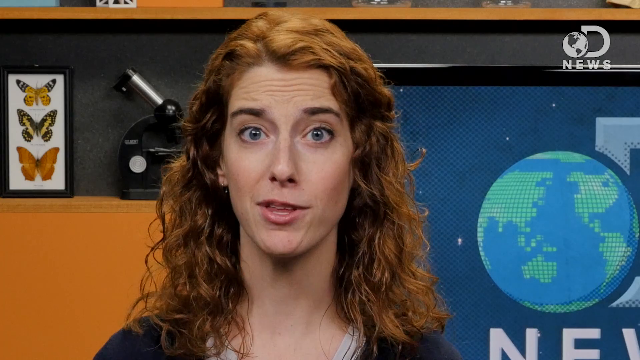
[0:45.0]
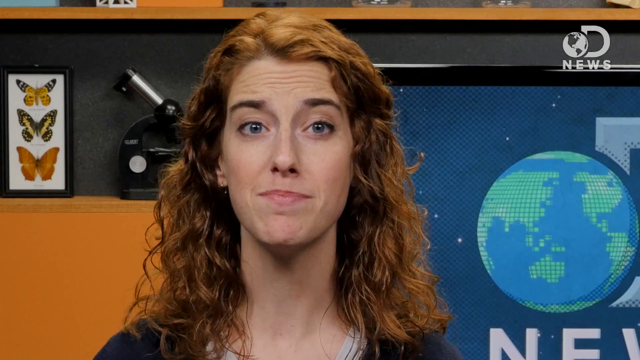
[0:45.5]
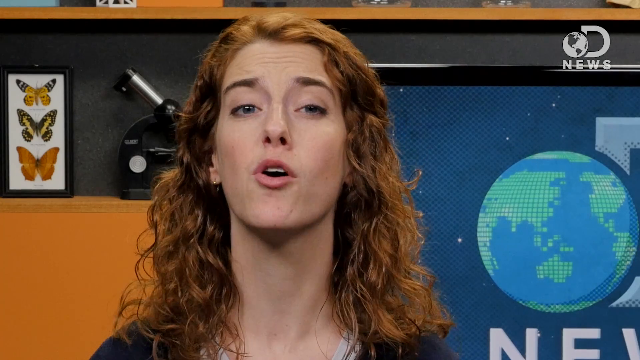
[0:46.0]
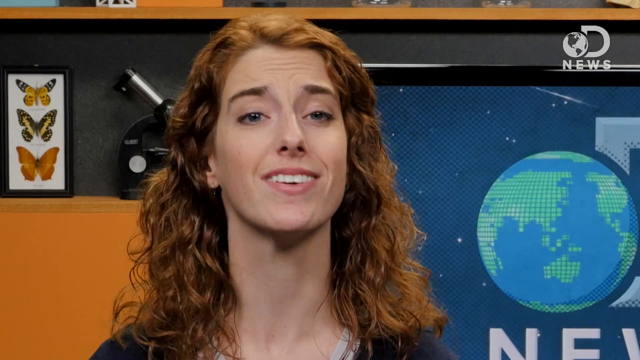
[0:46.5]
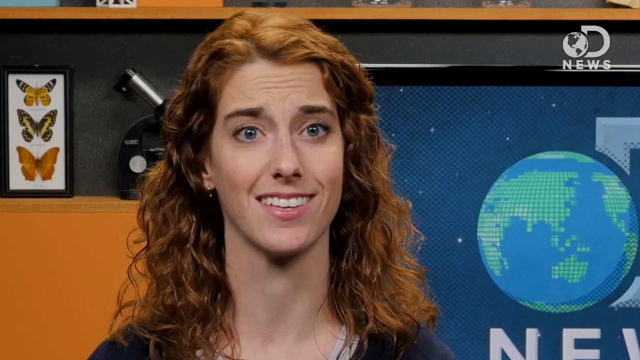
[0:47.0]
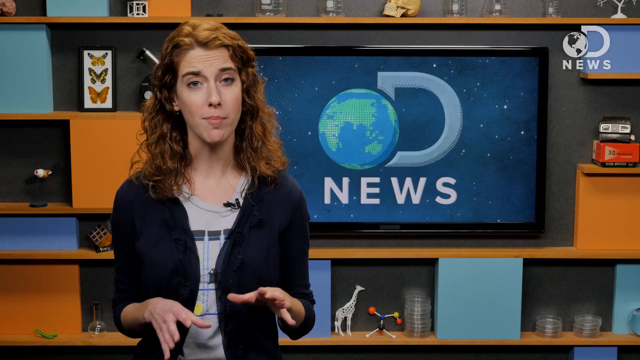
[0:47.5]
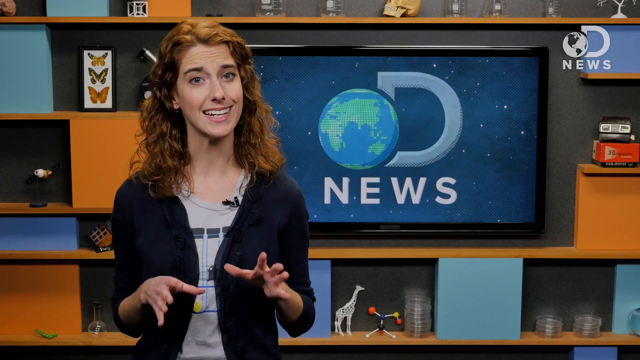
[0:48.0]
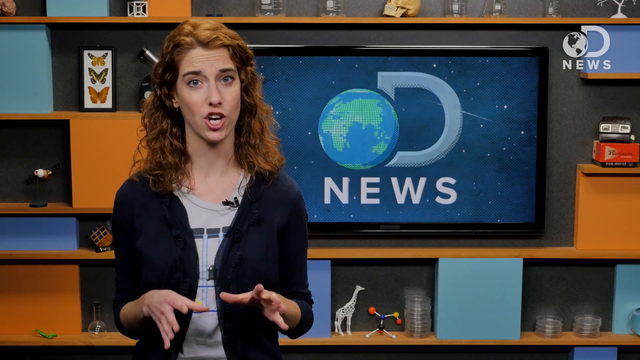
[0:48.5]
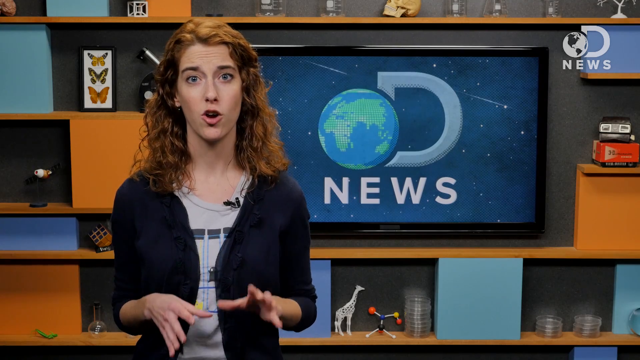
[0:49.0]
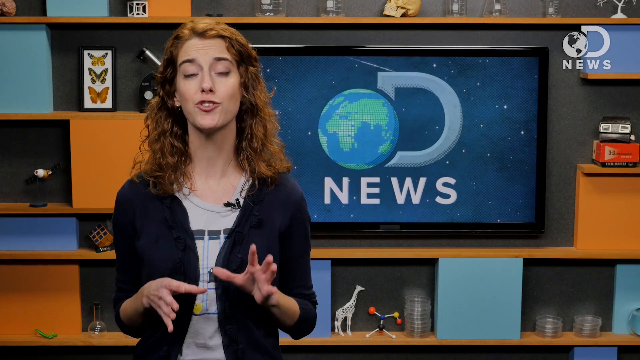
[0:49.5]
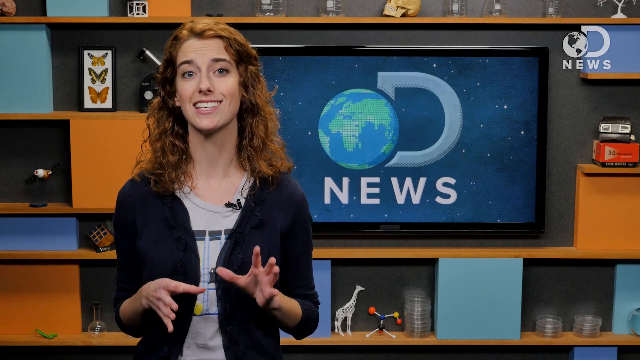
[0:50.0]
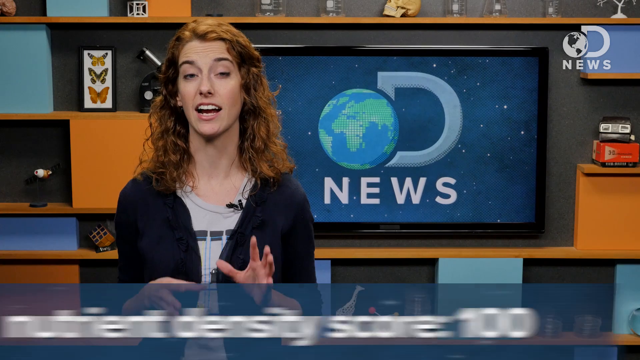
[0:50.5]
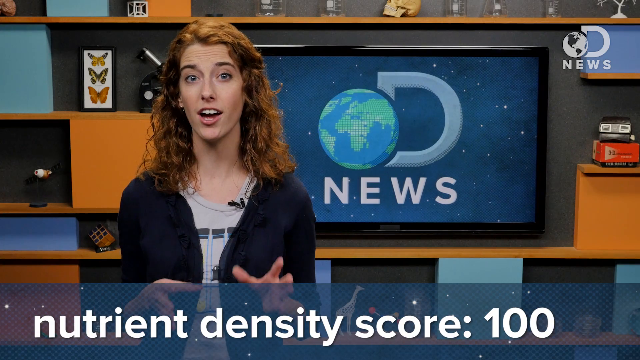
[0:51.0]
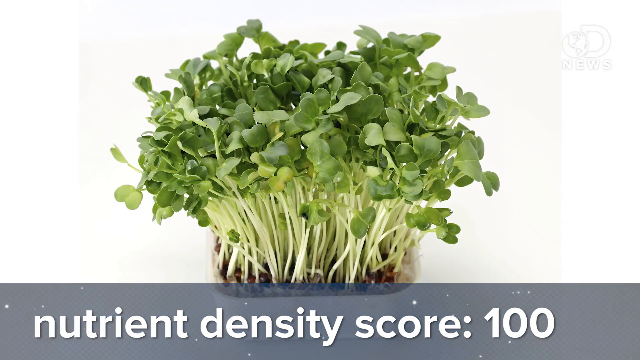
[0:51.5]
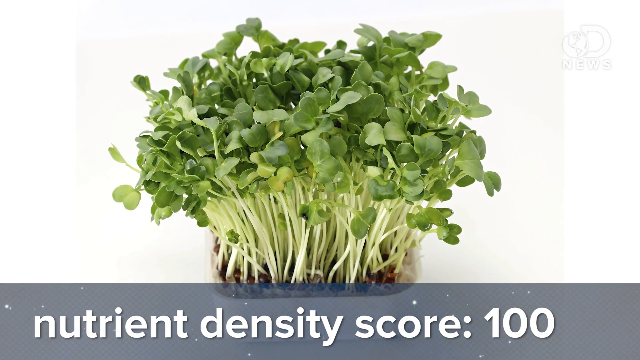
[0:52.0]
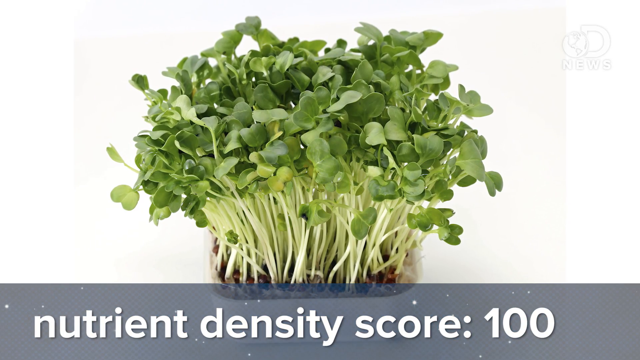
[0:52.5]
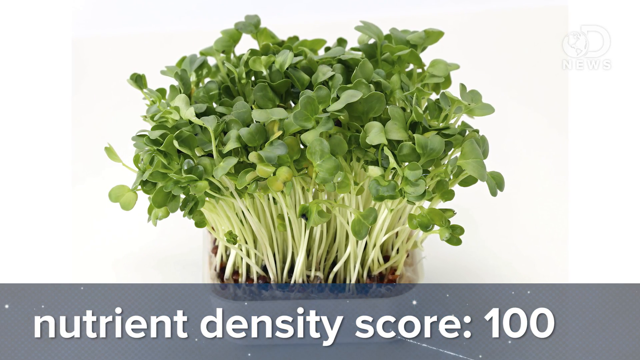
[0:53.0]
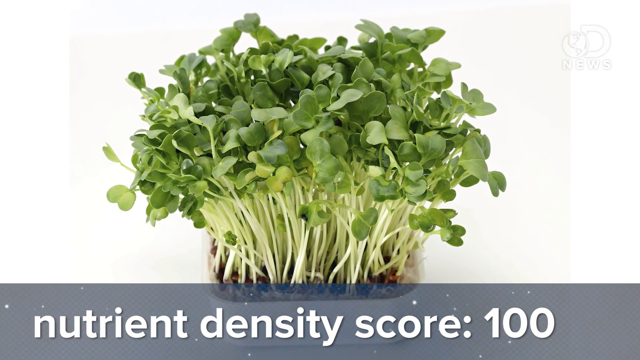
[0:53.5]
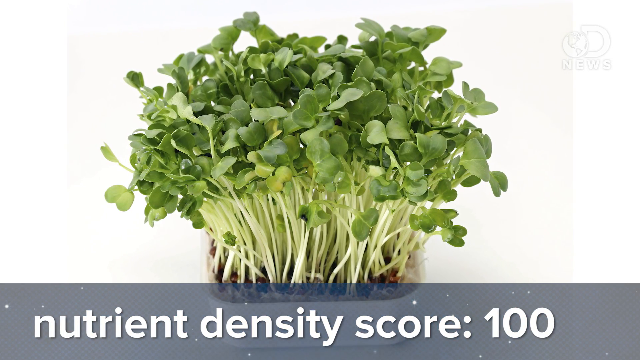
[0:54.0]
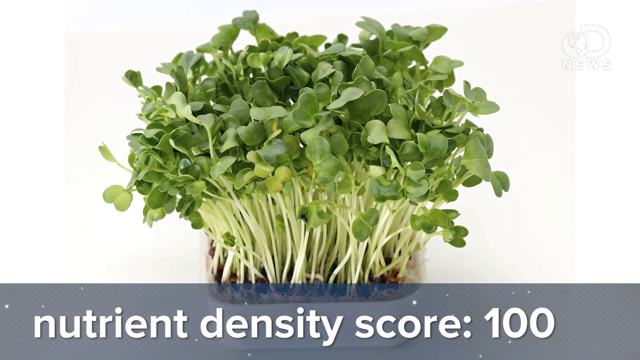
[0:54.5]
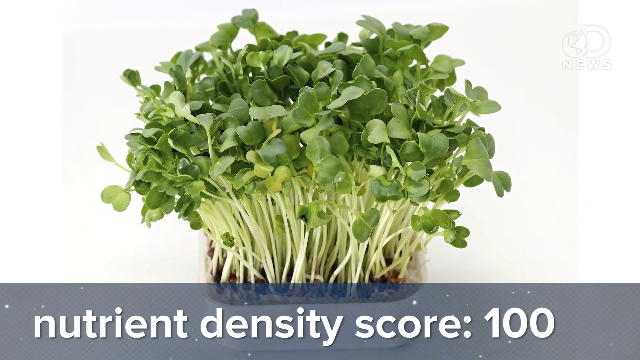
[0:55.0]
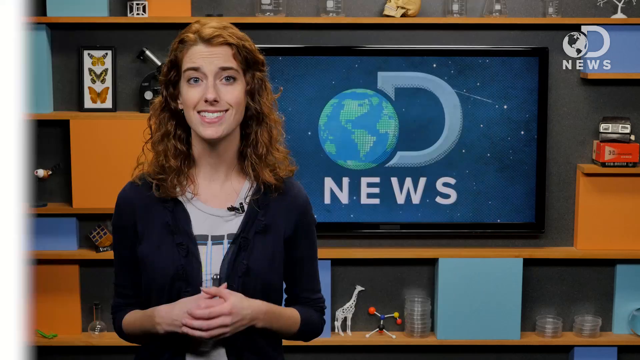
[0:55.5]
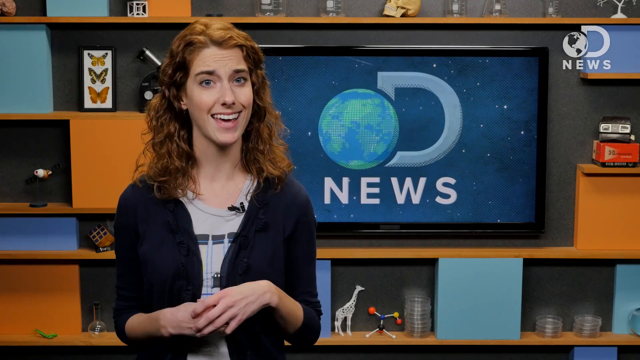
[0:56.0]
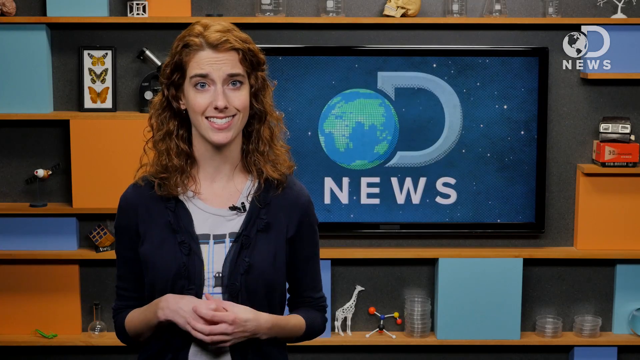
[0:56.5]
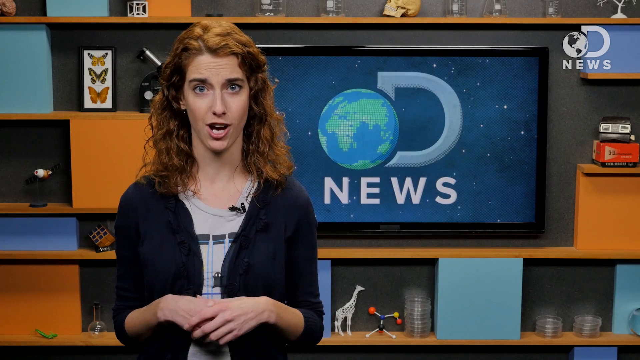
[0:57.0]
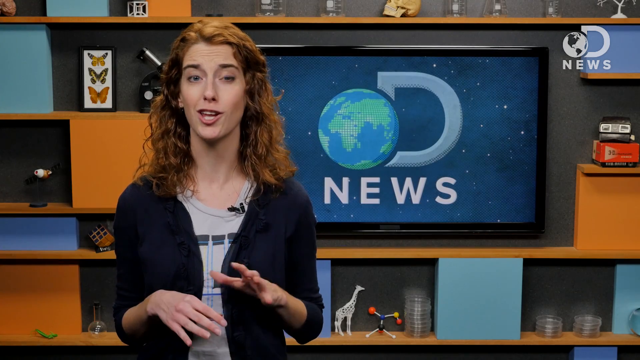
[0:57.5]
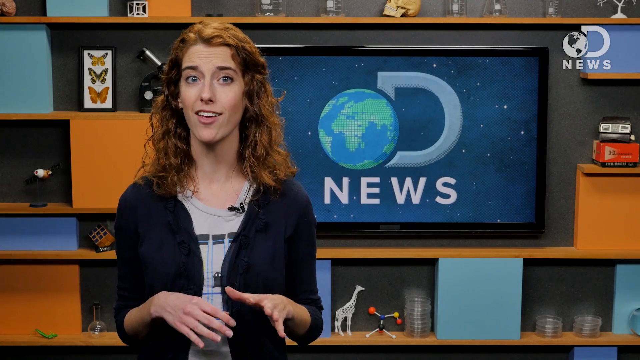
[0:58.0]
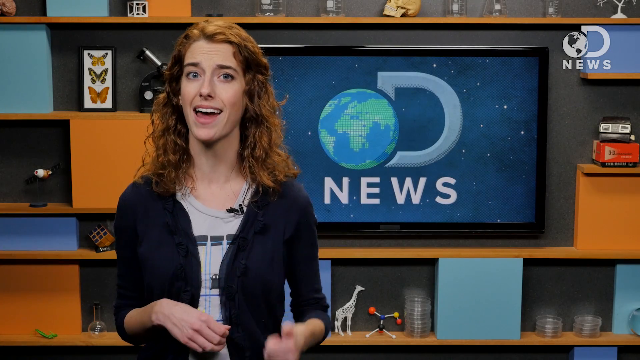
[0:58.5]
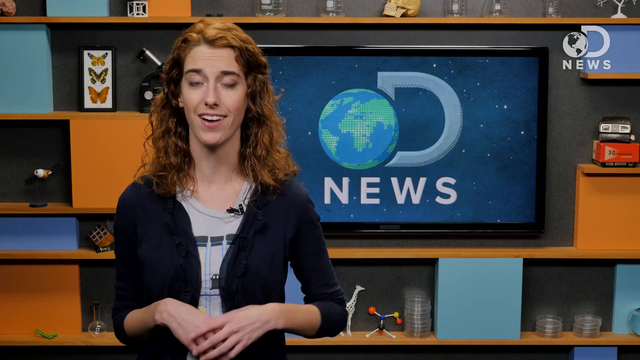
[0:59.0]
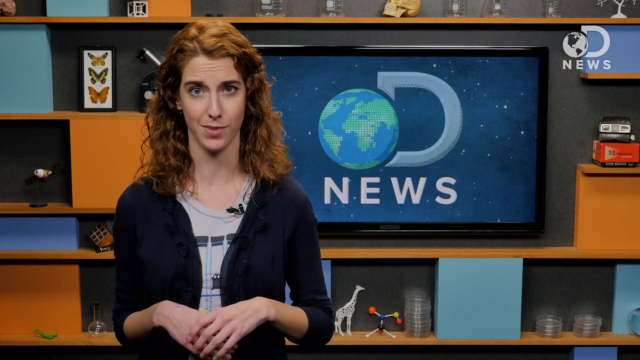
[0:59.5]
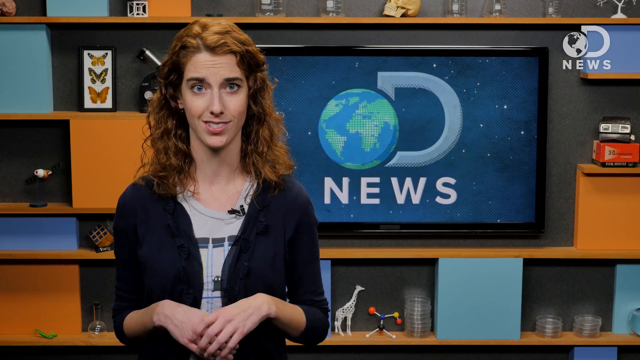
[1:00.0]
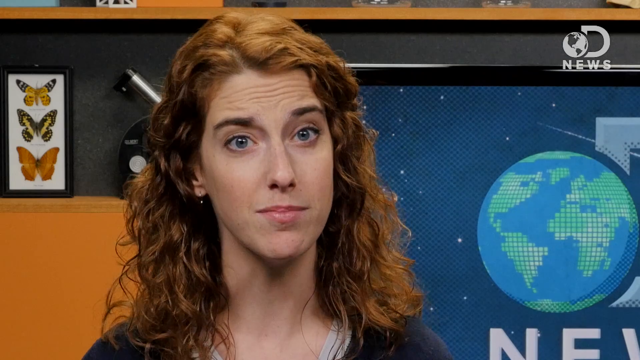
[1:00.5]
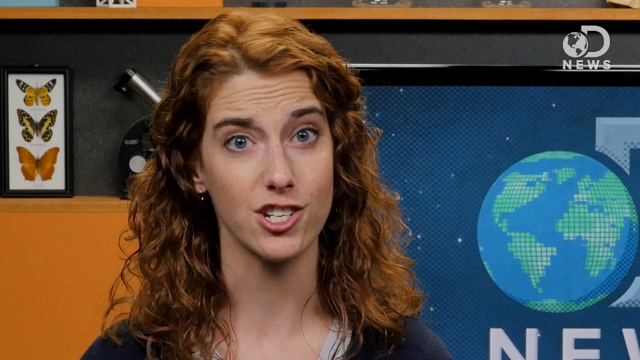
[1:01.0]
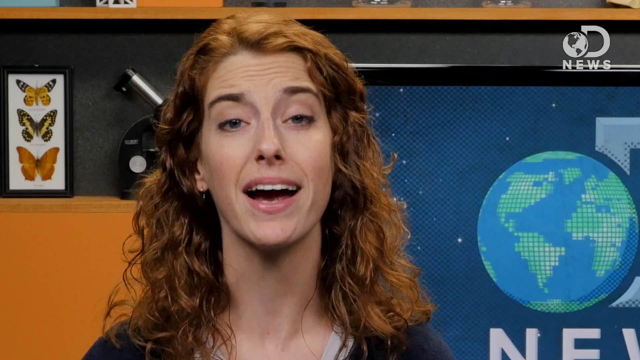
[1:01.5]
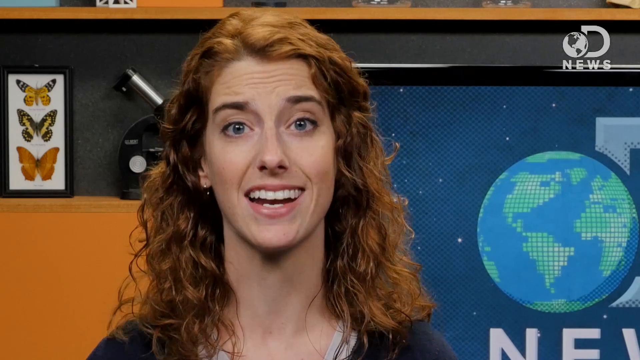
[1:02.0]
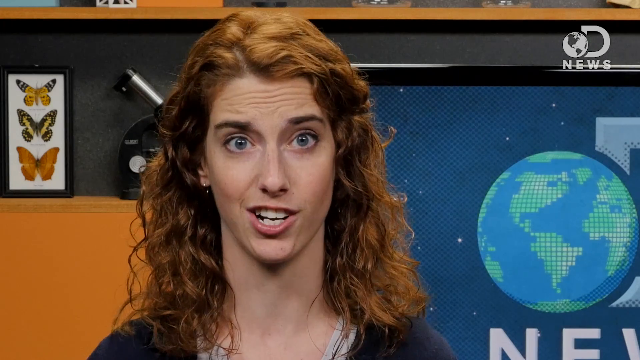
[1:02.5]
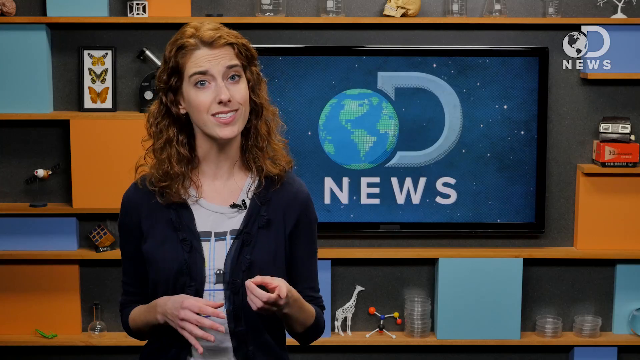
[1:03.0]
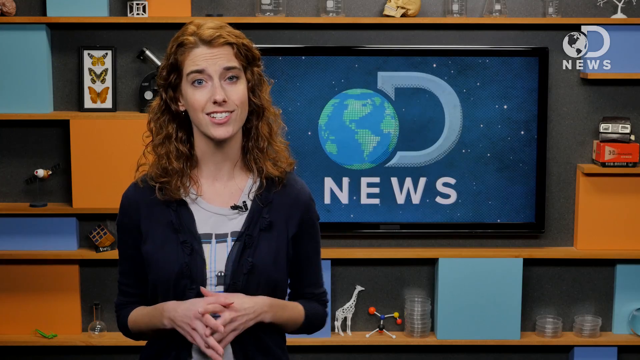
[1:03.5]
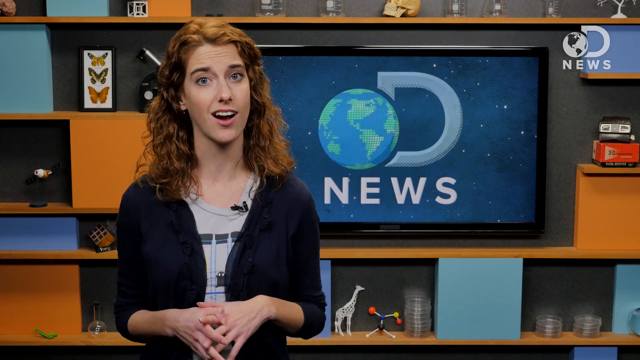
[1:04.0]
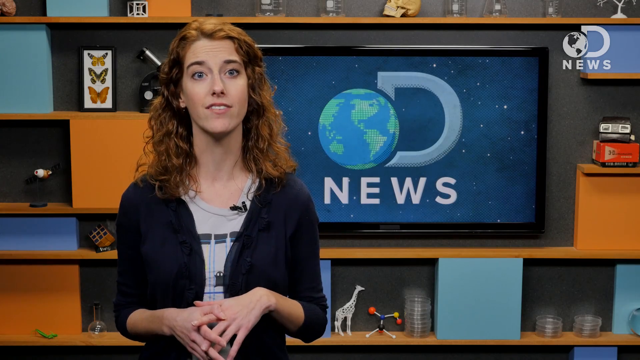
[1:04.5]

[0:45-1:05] The young woman, with red hair, white skin and blue eyes, wears a black cardigan sweater layered over a gray t-shirt with graphics on it. She appears to be in a studio, with orange, black and light blue in the background. Over her left shoulder is a television screen with a spinning globe icon, appearing to be potentially a news station of some kind. Graphics of various vegetables appear on the screen with nutrient scores; apparently some kind of head of lettuce is shown with a nutrient density score of 100.